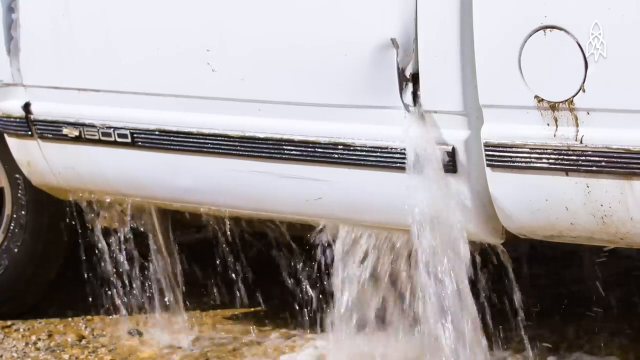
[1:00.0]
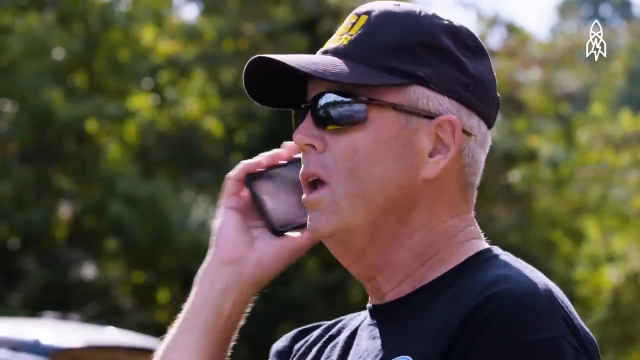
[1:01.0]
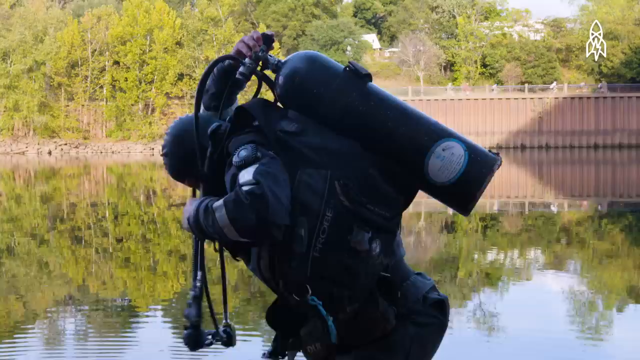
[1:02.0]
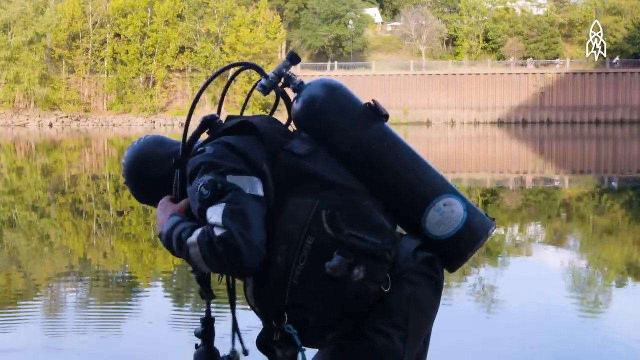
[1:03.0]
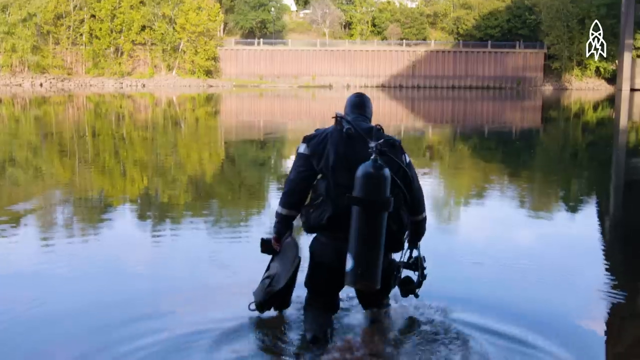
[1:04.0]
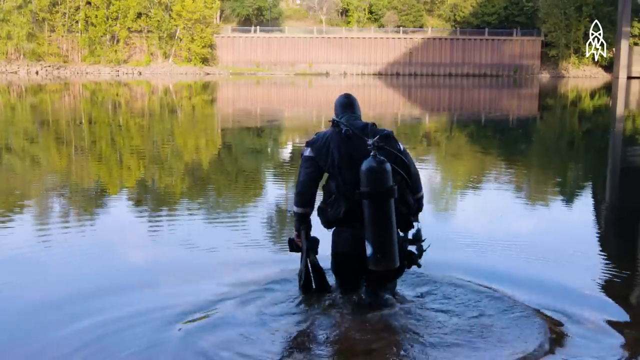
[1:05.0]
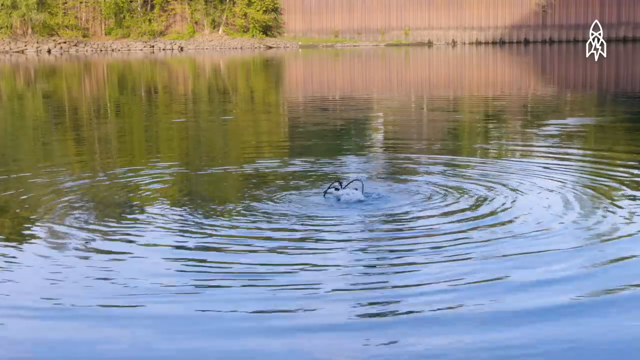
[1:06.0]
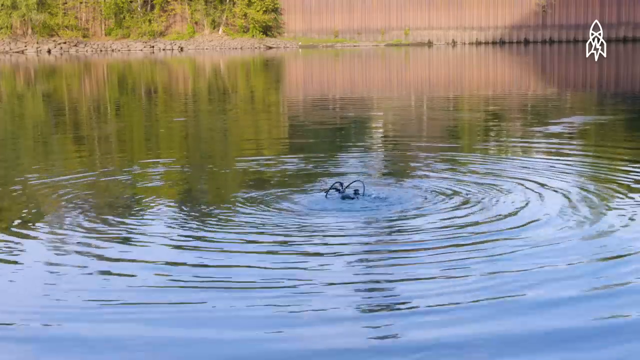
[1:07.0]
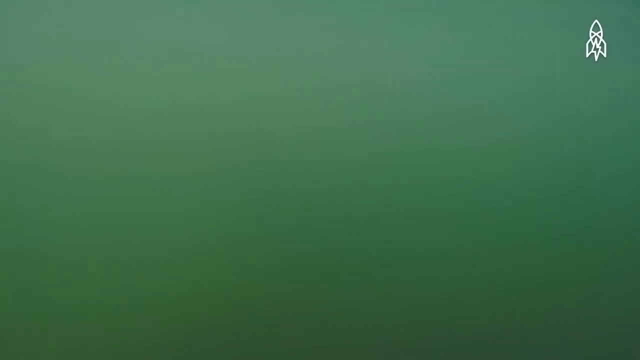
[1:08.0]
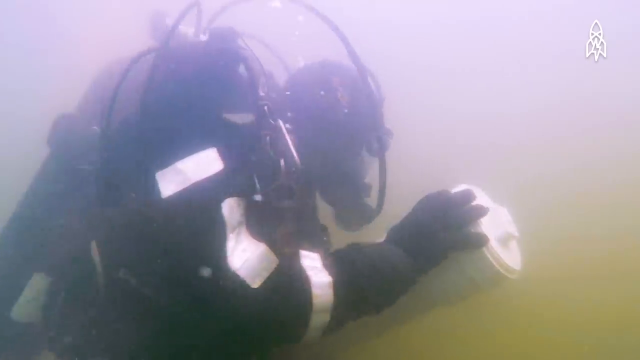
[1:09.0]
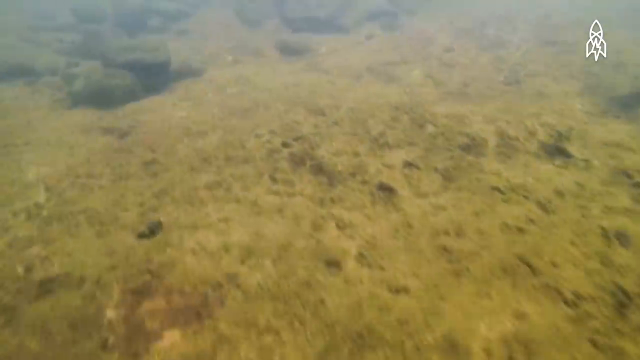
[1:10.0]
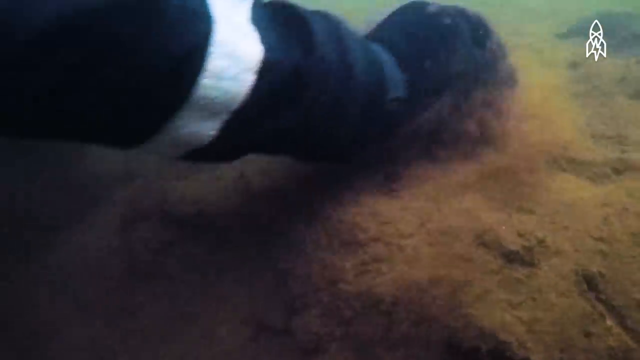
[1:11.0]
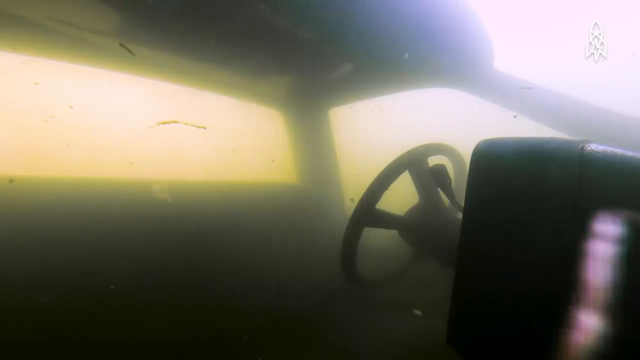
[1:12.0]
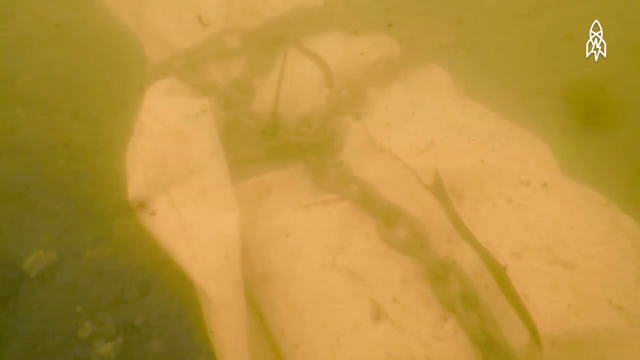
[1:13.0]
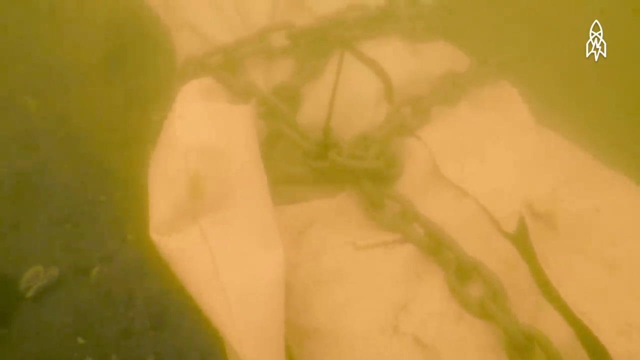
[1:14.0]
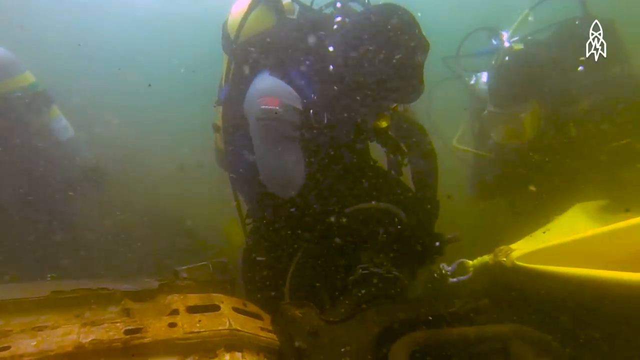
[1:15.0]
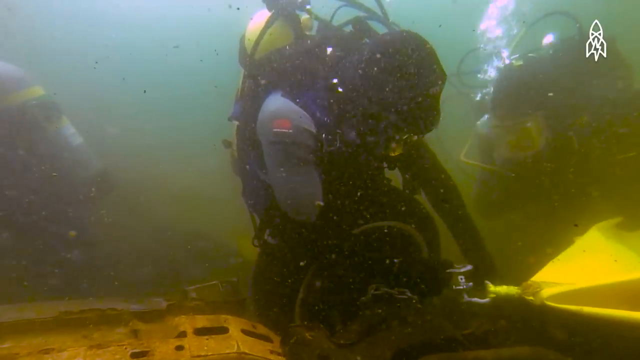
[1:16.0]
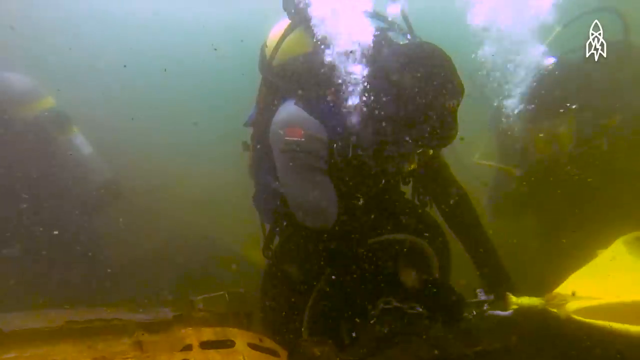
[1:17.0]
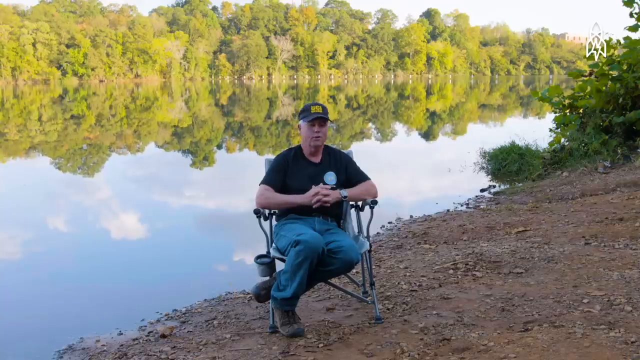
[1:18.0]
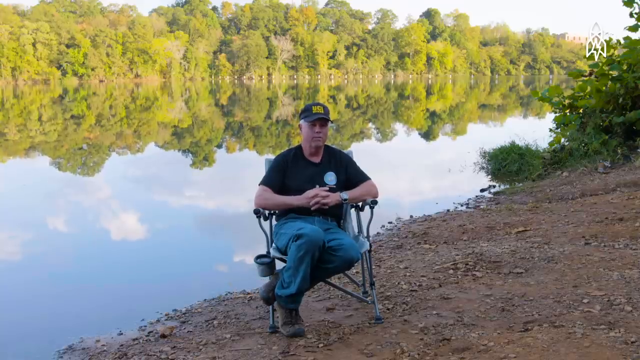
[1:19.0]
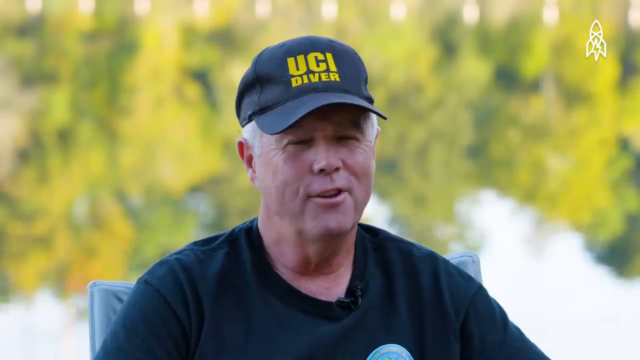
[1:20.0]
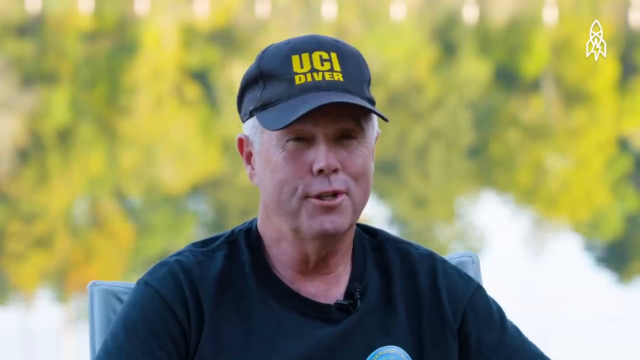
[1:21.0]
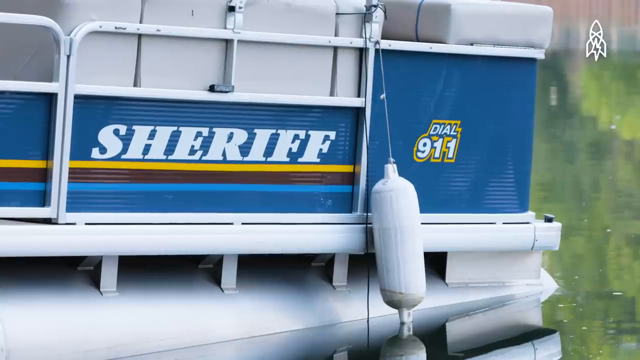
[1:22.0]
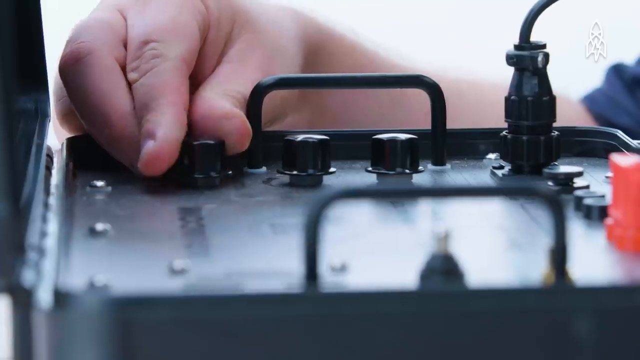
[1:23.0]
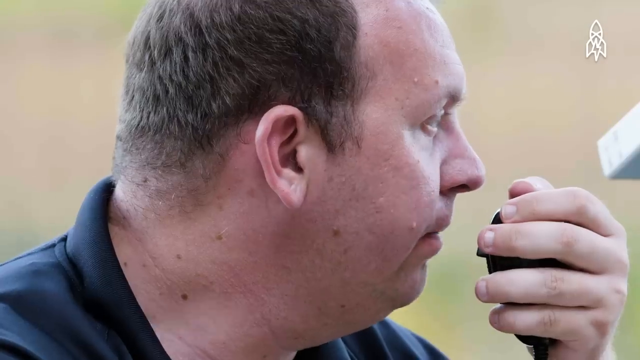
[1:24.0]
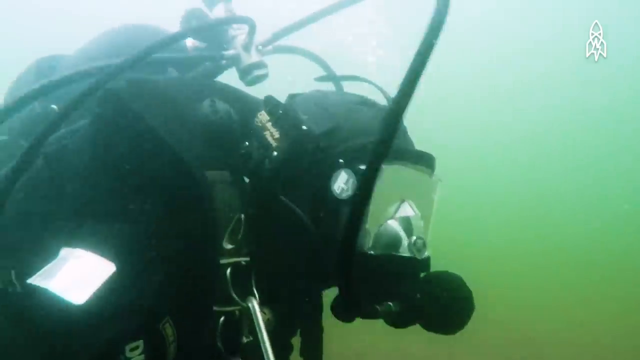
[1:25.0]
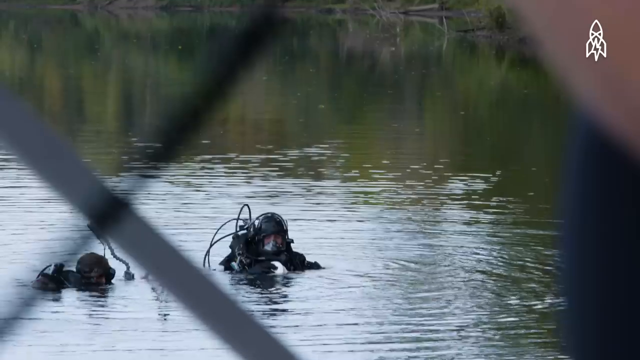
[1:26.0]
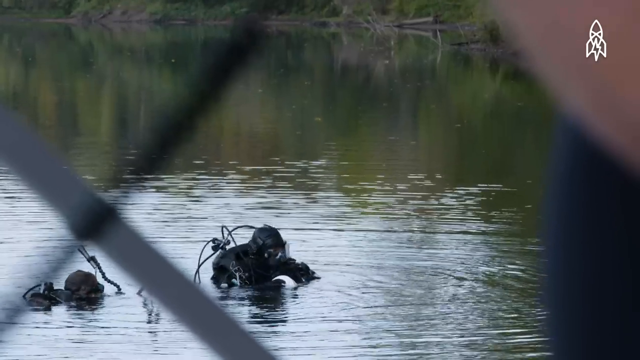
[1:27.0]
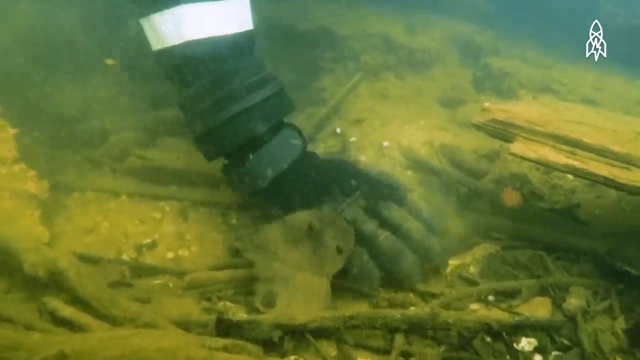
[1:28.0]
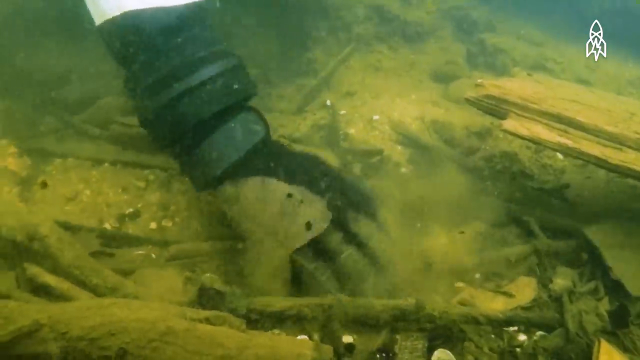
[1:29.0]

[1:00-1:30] A car pulls a big white car, which was underwater, out of the river. The diver then calls on the phone, apparently reporting on the evidence they have found. The other diver is dressed in black and wears protective gear. The divers go back into the water to dive again. The water is very clear, and the divers check in the sand for evidence and dig to help each other uncover it. The UCI diver is shown speaking.